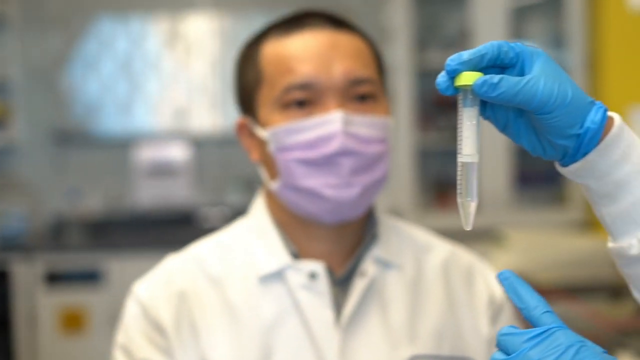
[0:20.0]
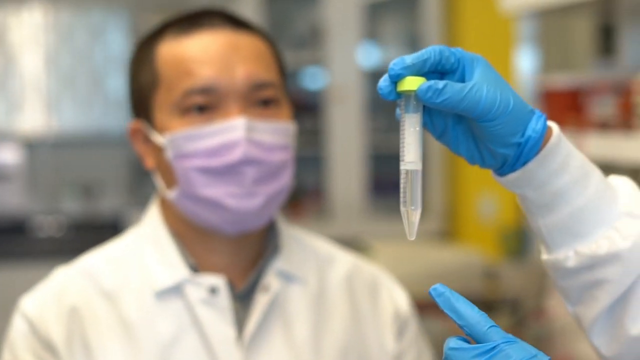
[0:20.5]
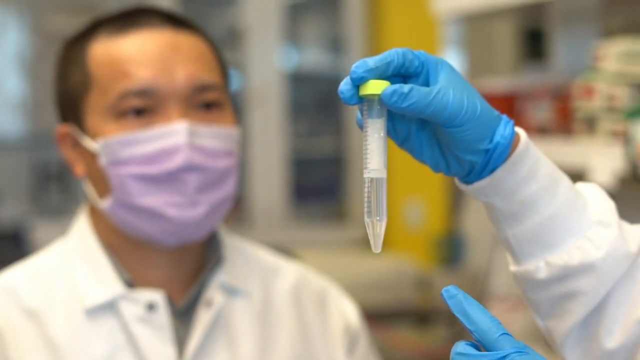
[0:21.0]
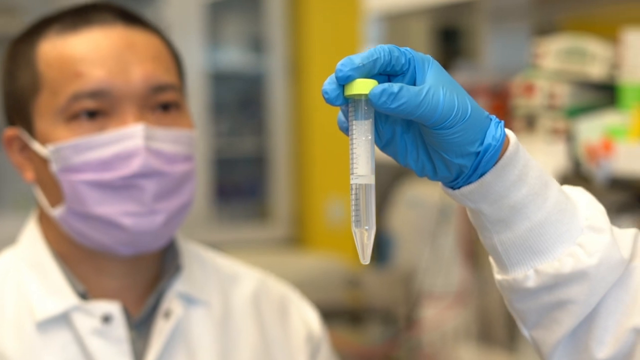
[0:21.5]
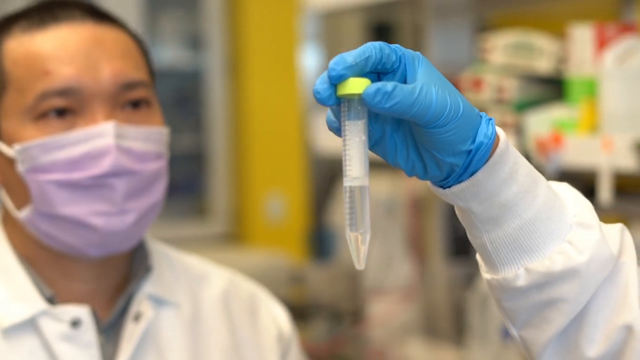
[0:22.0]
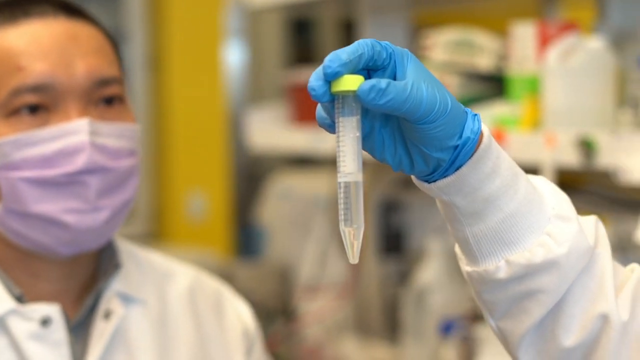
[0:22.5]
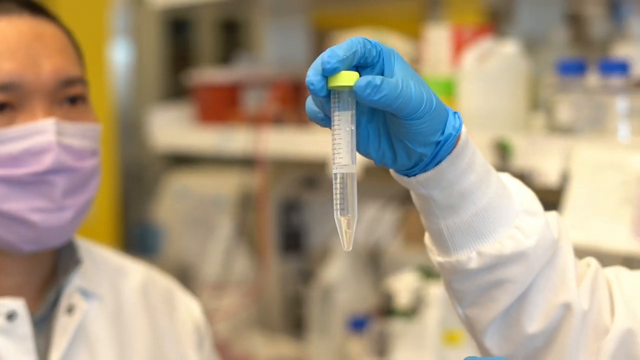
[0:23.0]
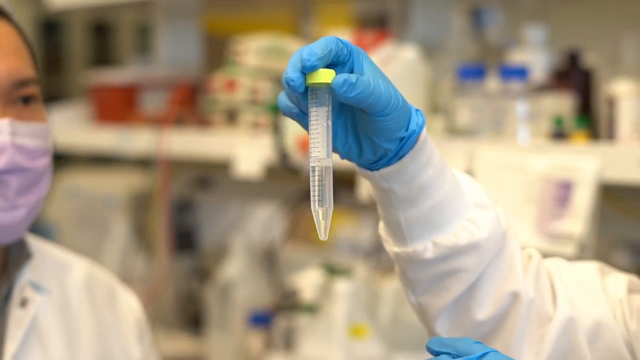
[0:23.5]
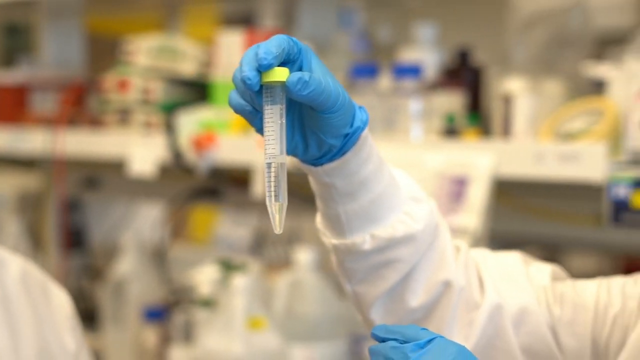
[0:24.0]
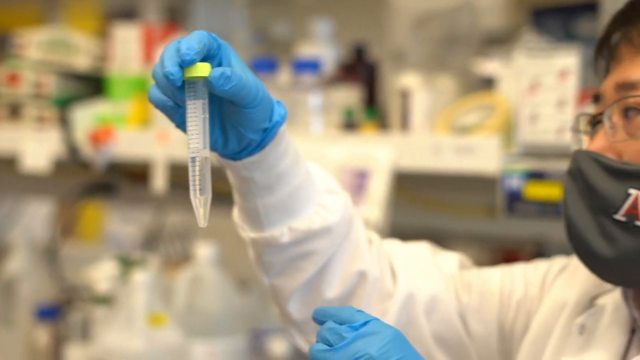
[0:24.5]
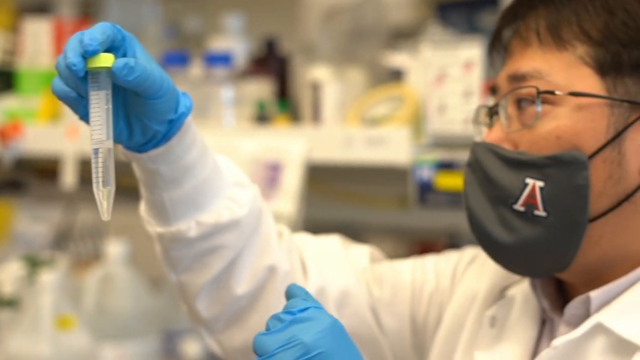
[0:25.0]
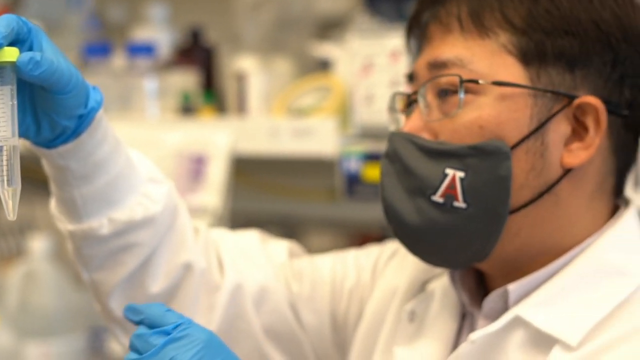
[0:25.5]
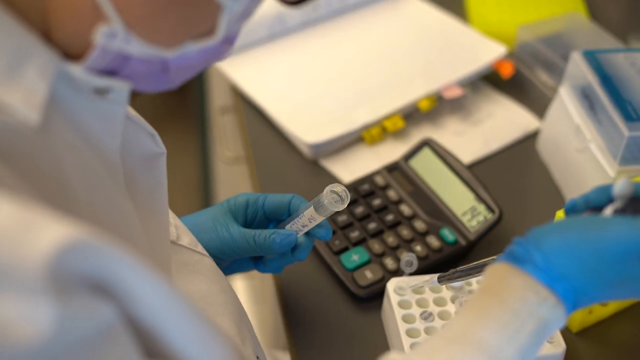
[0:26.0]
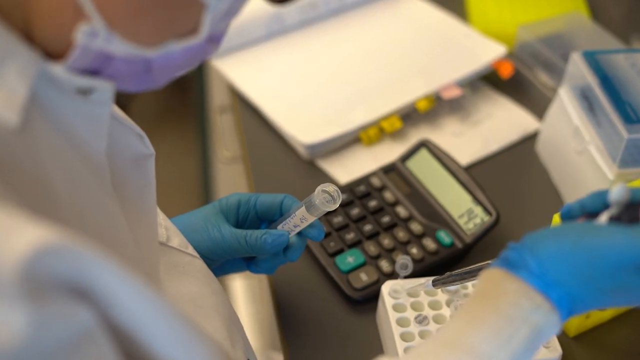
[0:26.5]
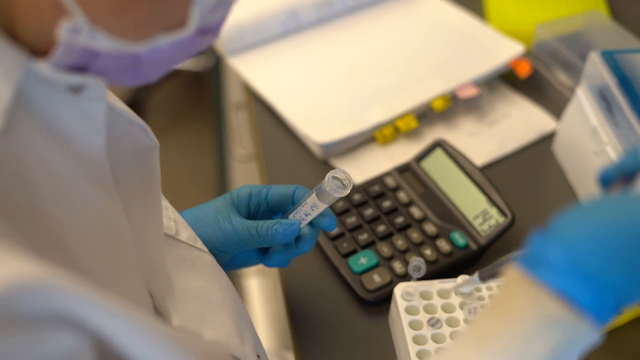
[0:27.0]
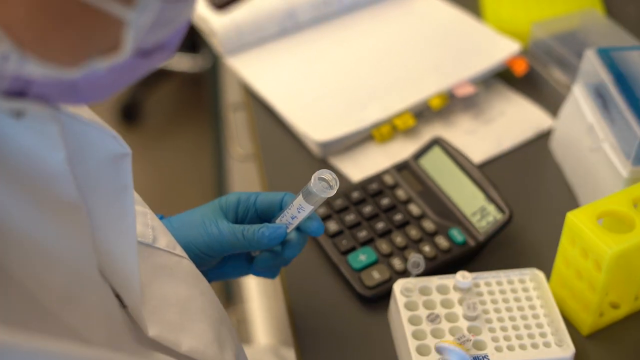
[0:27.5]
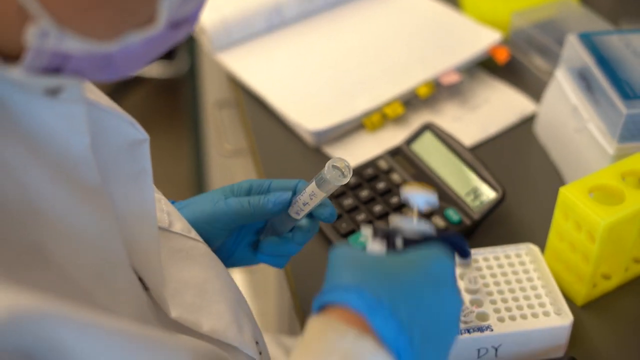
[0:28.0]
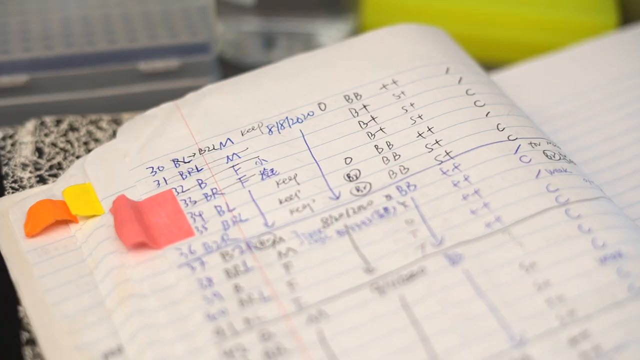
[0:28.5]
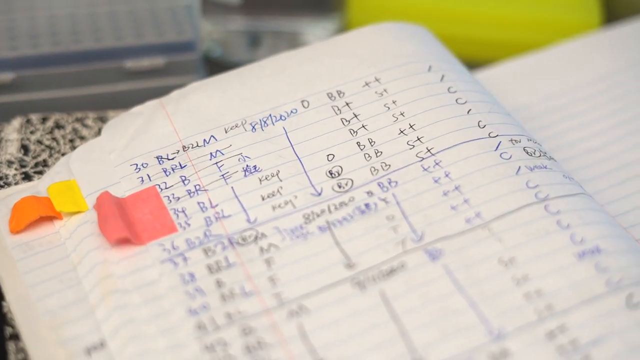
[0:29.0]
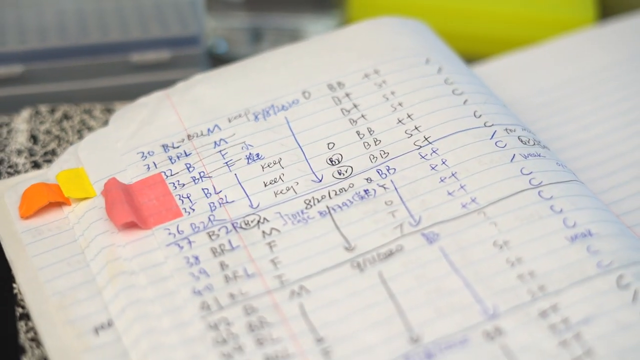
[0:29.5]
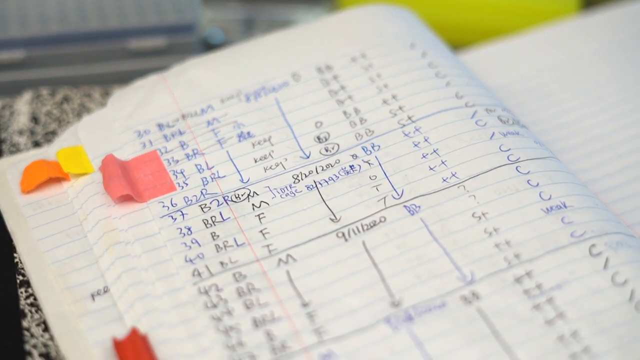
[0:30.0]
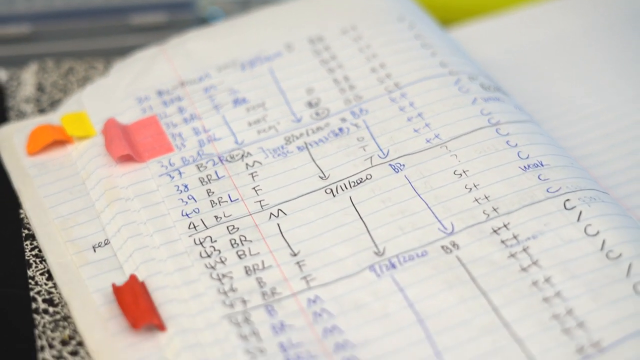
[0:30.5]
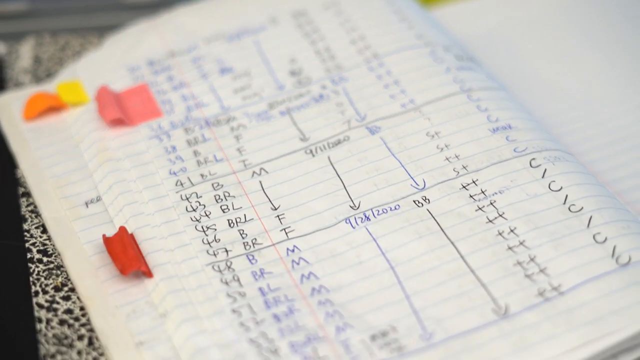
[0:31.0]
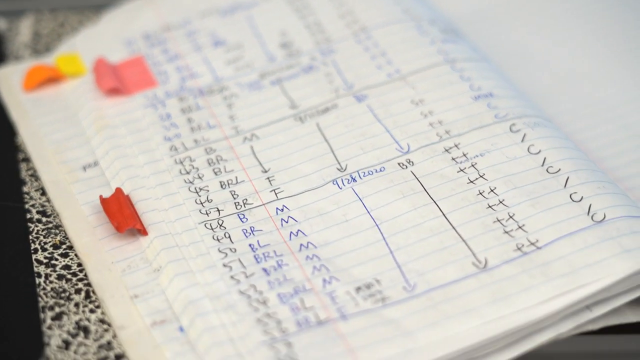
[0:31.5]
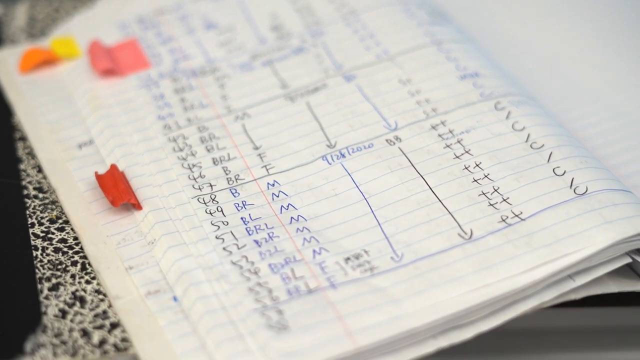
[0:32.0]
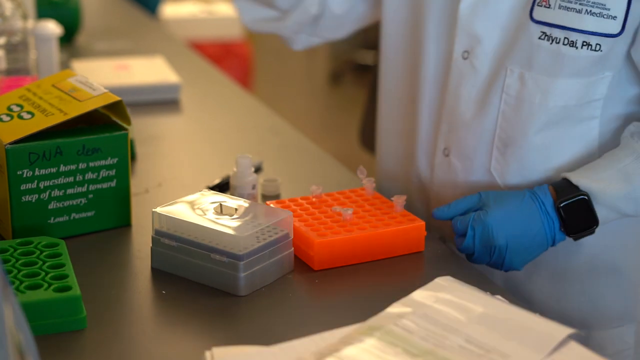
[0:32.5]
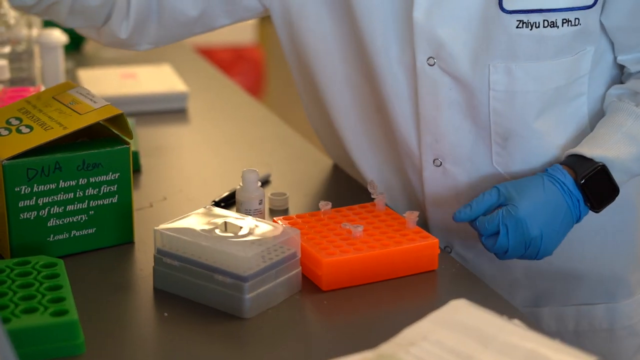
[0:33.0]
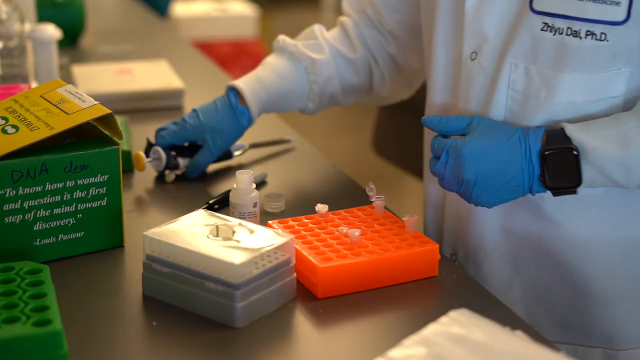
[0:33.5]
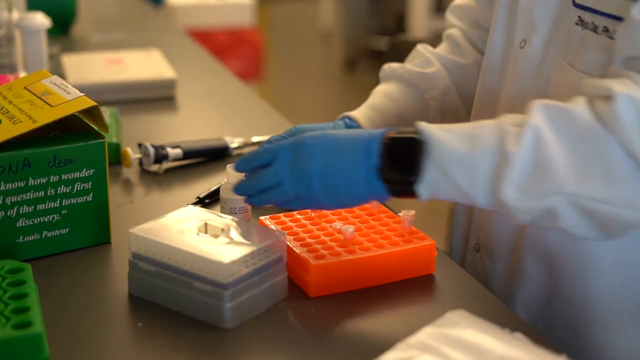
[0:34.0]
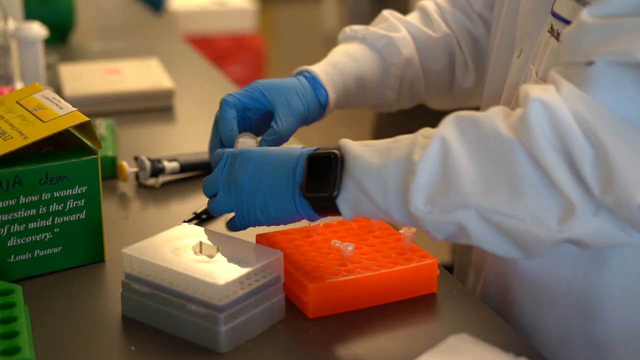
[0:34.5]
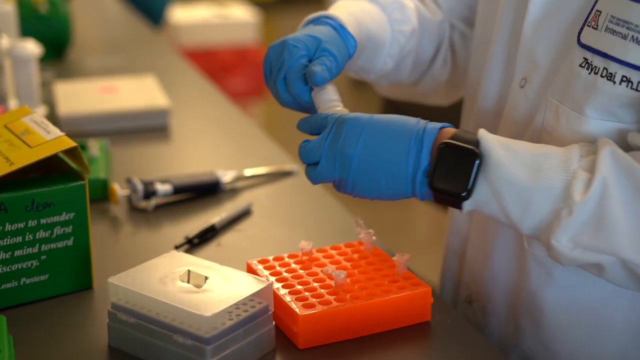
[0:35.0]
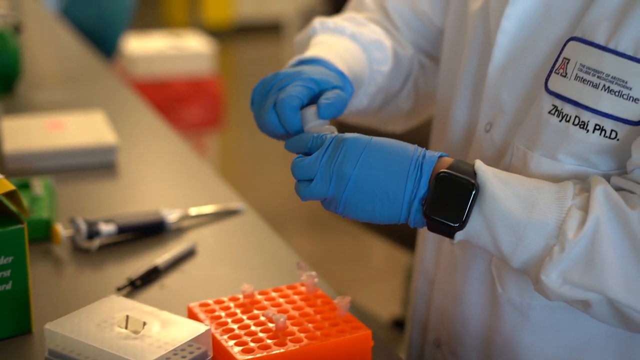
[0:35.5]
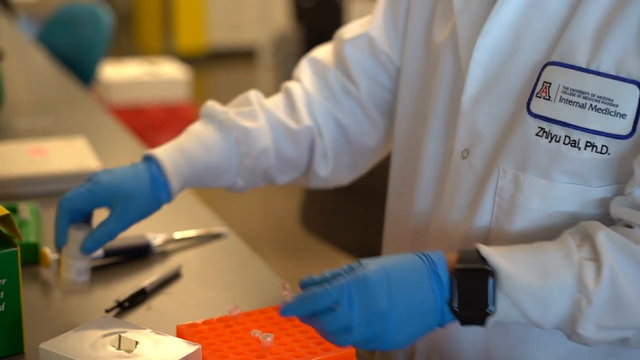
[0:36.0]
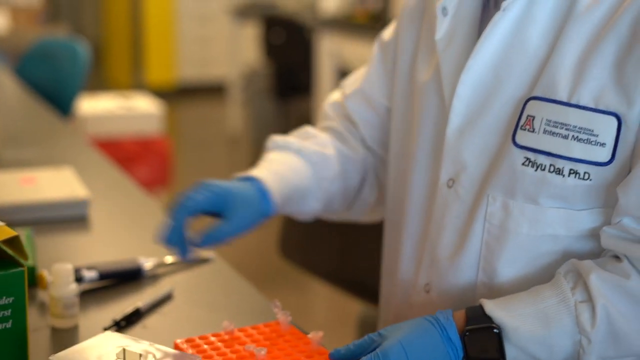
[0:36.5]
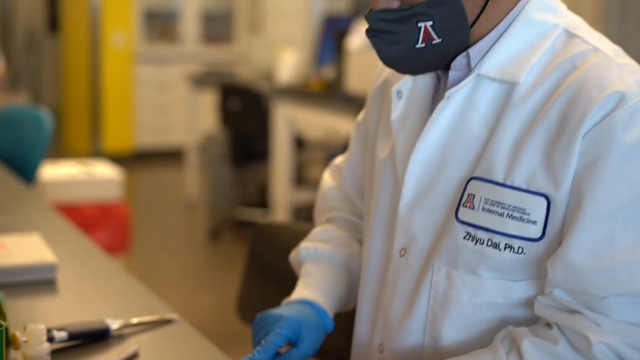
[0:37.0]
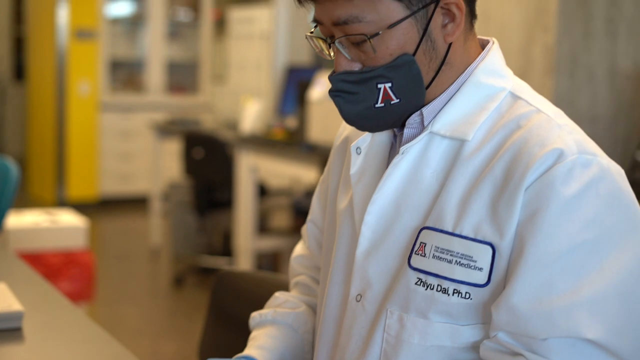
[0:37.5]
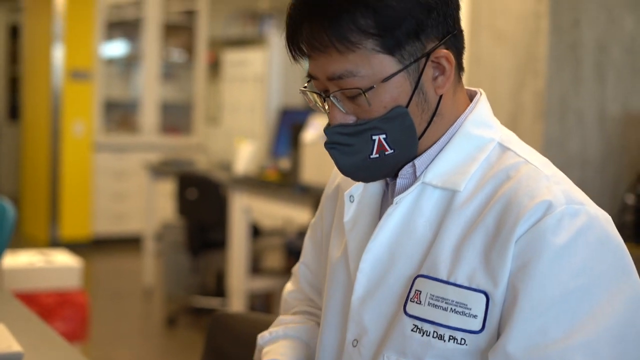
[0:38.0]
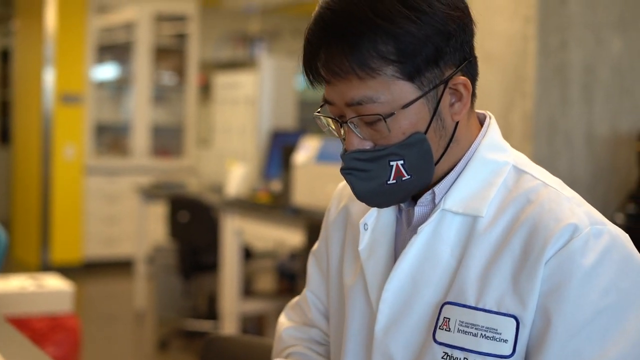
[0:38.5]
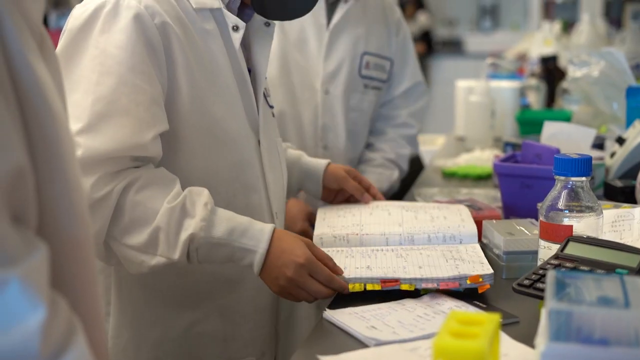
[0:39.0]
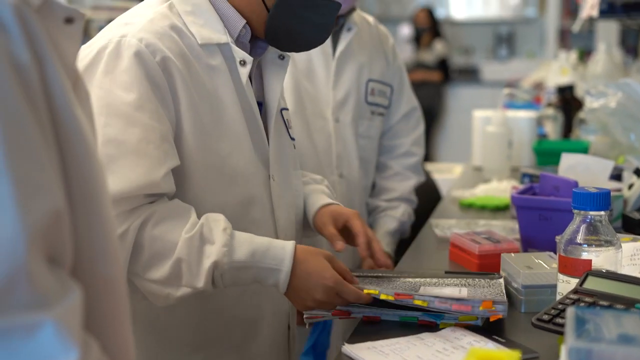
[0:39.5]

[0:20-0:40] Someone off screen, wearing blue latex gloves and a white sleeve, holds up a clear test tube with a yellow lid. Zhiyu Dai looks on in a white lab coat and a purple mask. The camera pans around to the left to show the man holding the test tube, who wears a red face mask with the letter A on it for Arizona State. The camera then pans to an open binder with tabs and a black square calculator. A person wearing blue latex gloves, a purple mask and a white lab coat holds a test tube without a lid. An open composition notebook follows, presumably with lab results noted, and the camera pans down the page. Zhiyu Dai closes a small bottle, and then multiple researchers stand around discussing information they have gathered.